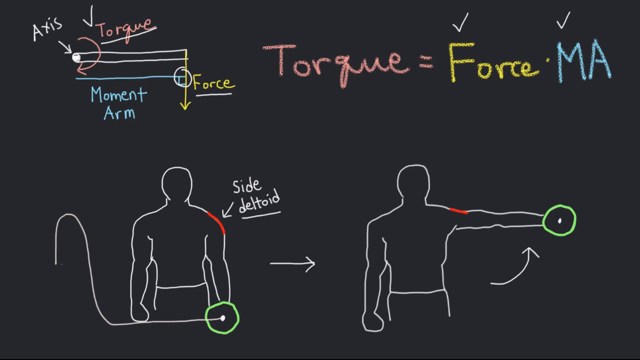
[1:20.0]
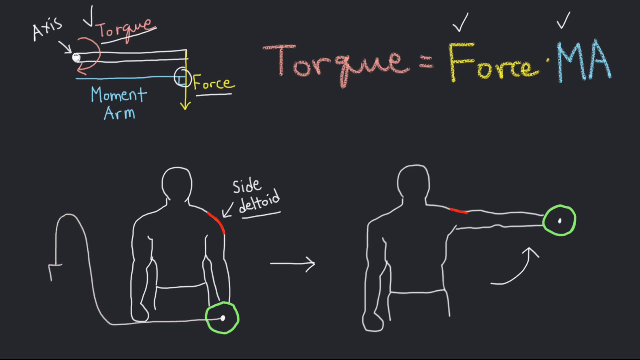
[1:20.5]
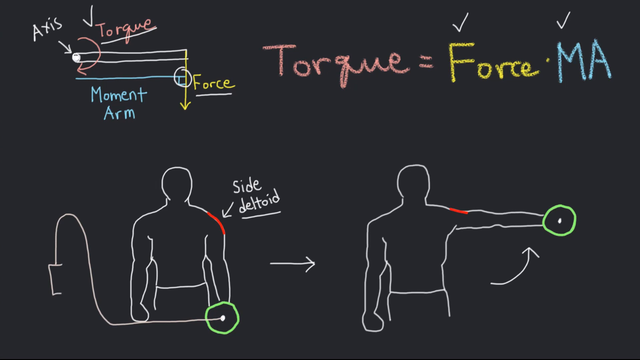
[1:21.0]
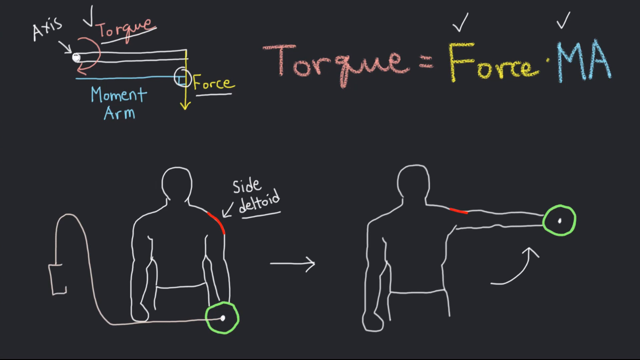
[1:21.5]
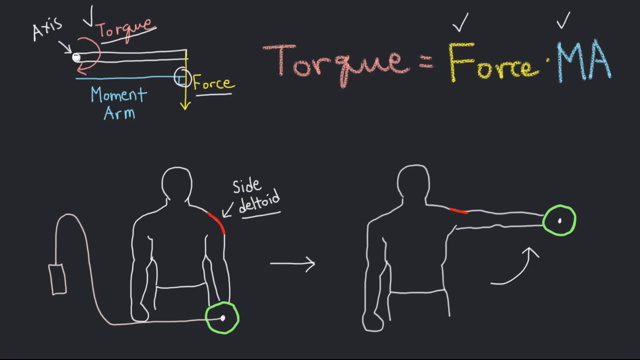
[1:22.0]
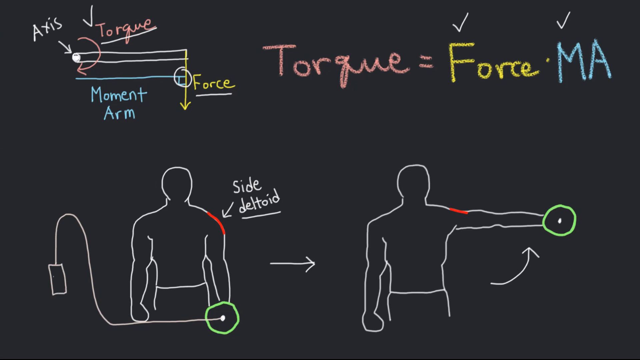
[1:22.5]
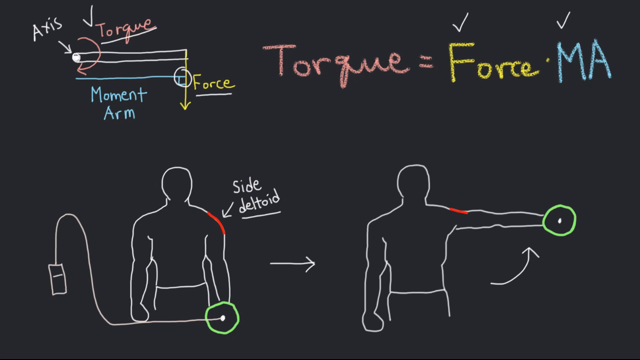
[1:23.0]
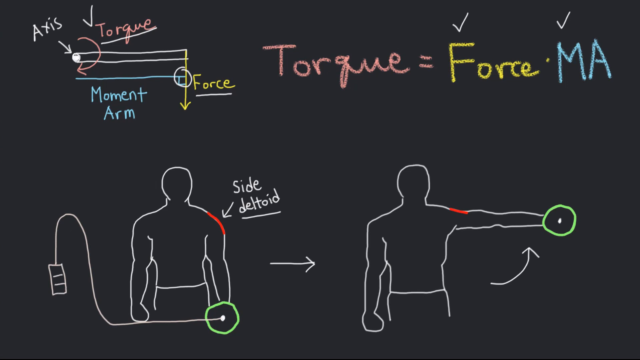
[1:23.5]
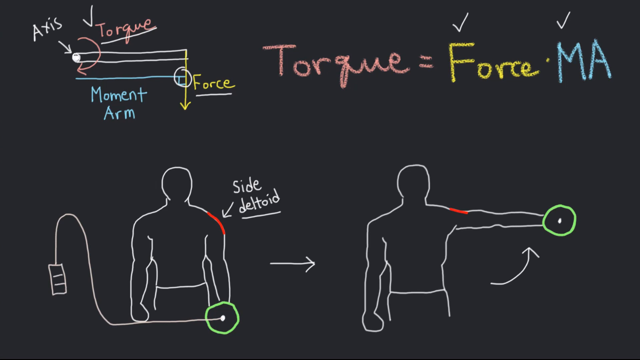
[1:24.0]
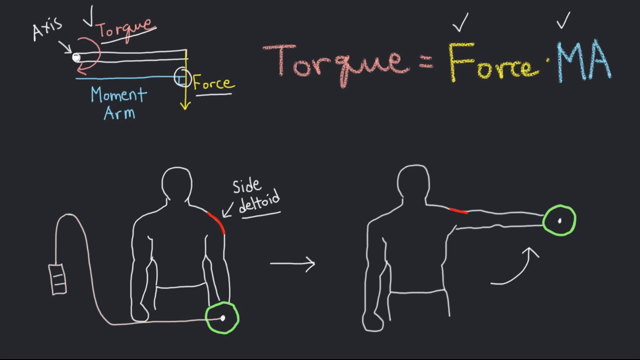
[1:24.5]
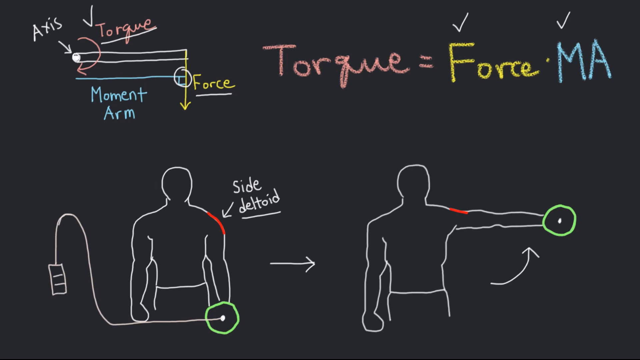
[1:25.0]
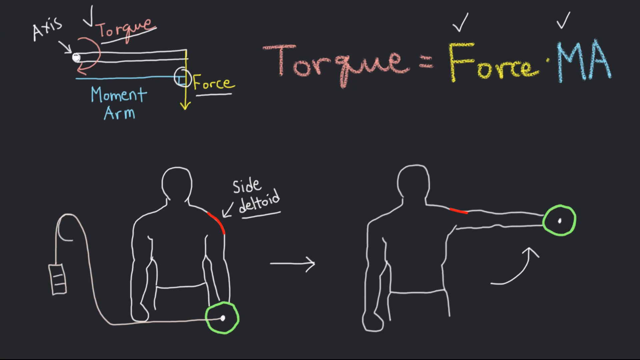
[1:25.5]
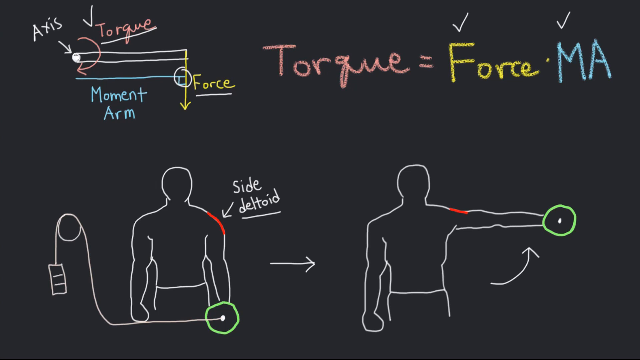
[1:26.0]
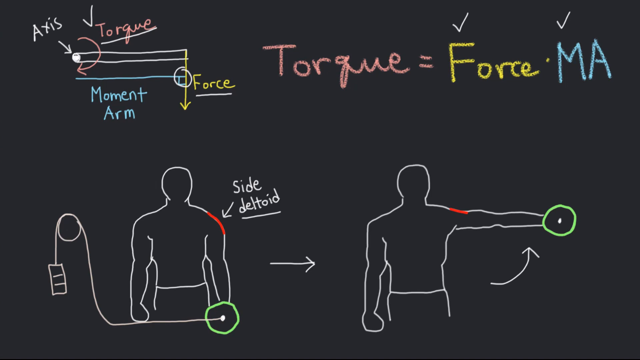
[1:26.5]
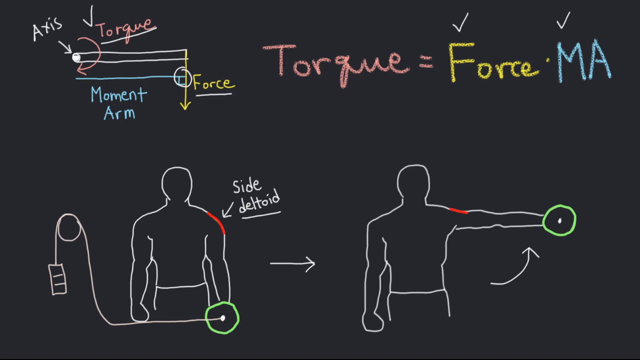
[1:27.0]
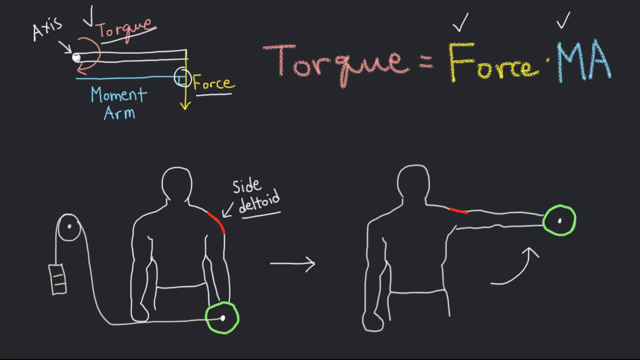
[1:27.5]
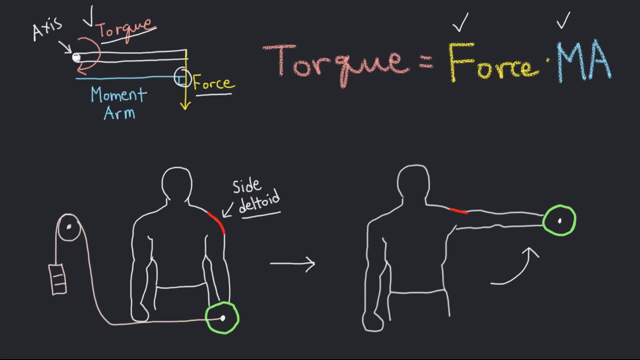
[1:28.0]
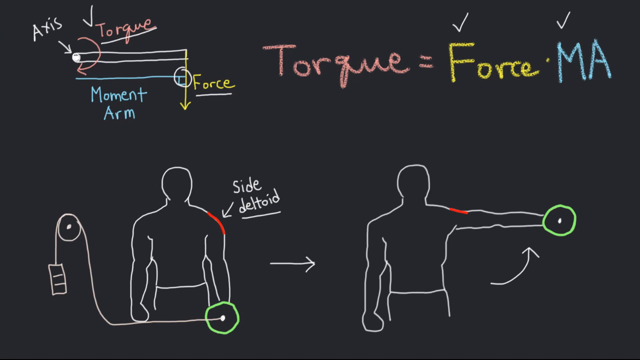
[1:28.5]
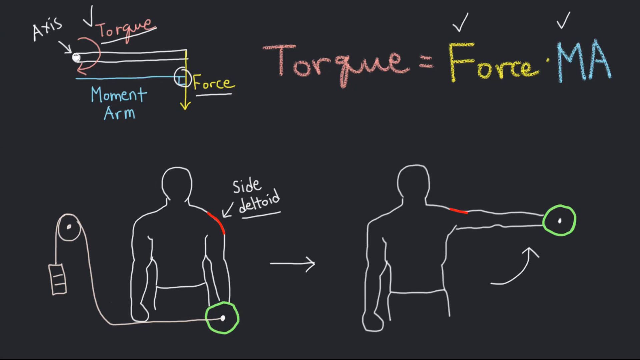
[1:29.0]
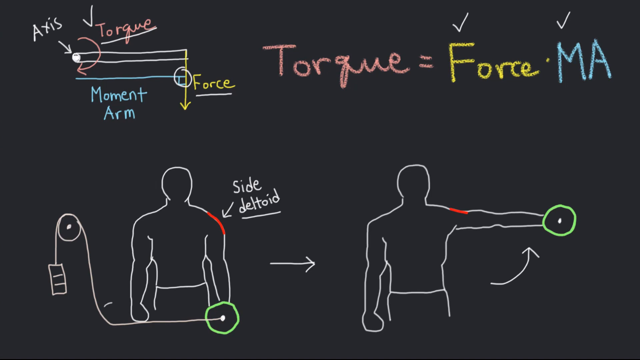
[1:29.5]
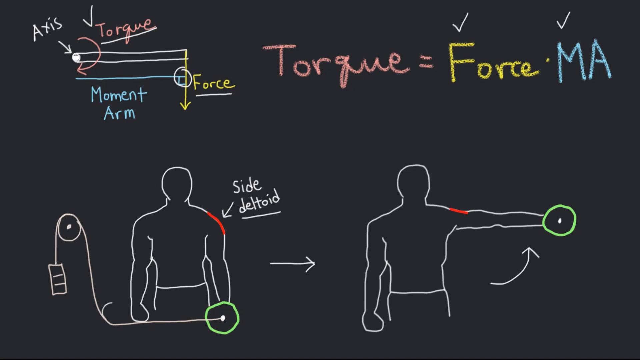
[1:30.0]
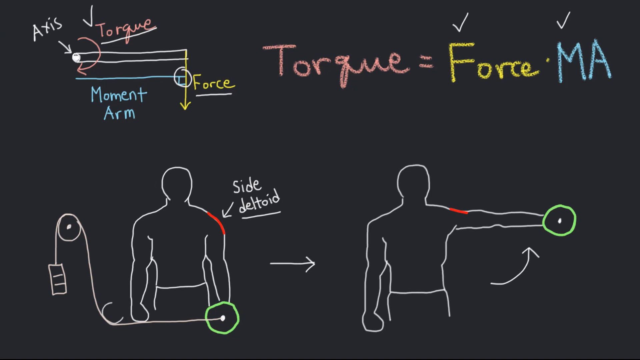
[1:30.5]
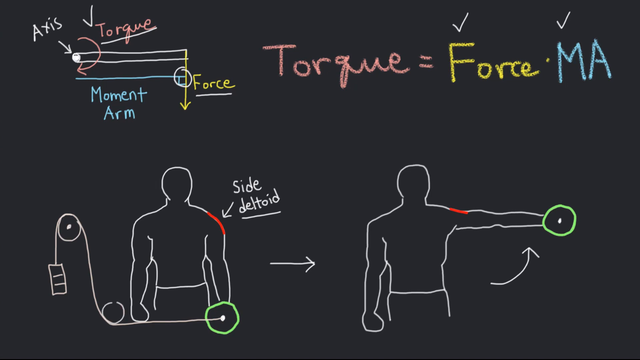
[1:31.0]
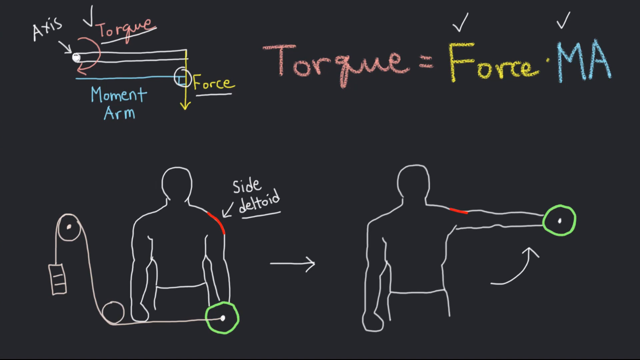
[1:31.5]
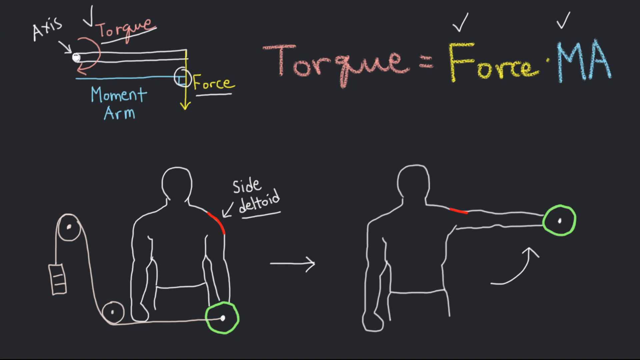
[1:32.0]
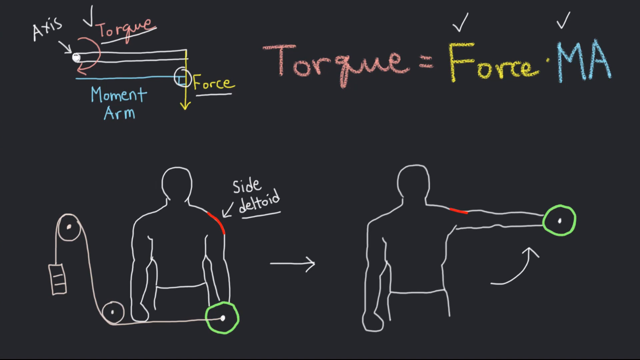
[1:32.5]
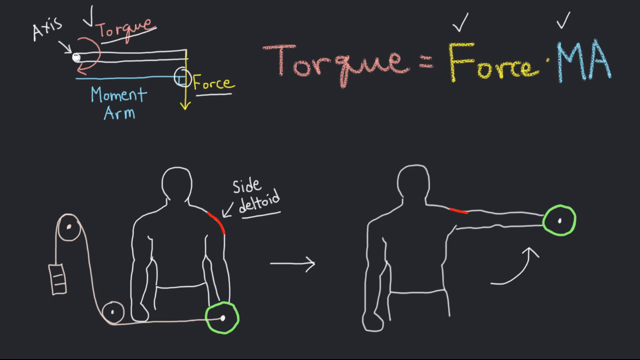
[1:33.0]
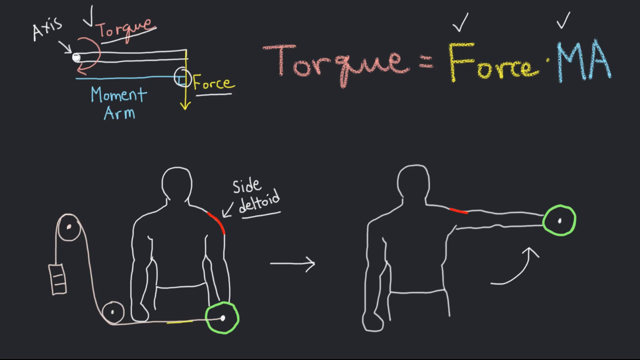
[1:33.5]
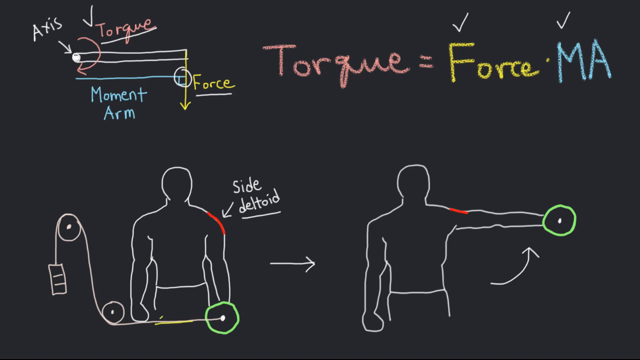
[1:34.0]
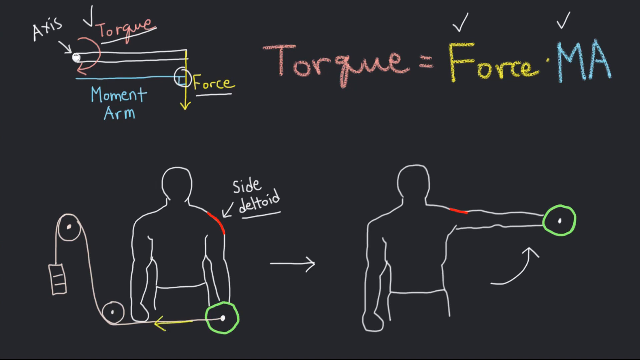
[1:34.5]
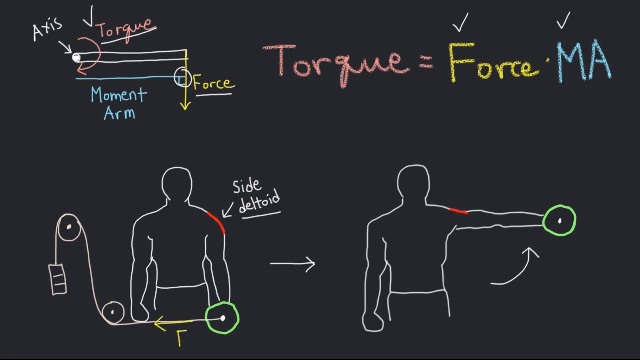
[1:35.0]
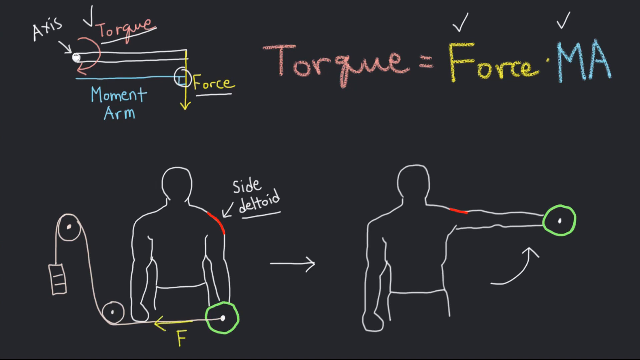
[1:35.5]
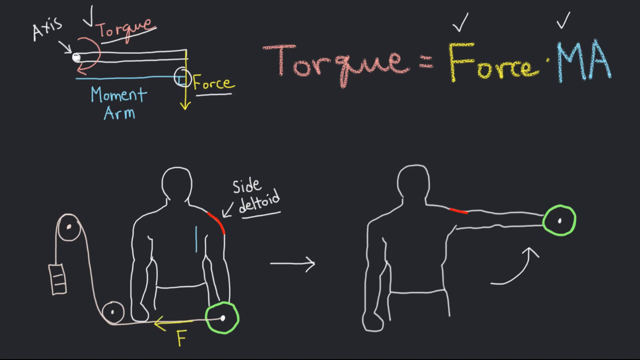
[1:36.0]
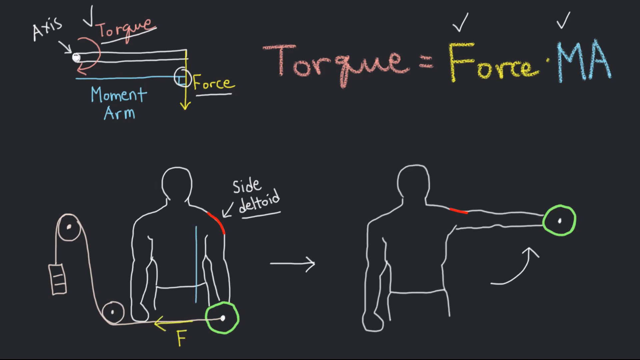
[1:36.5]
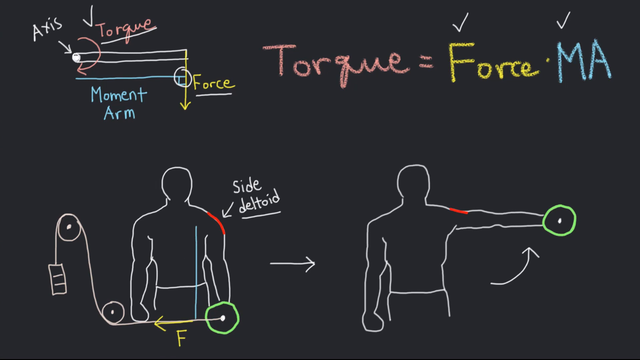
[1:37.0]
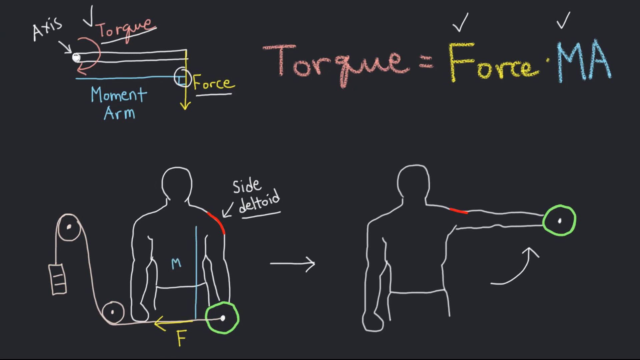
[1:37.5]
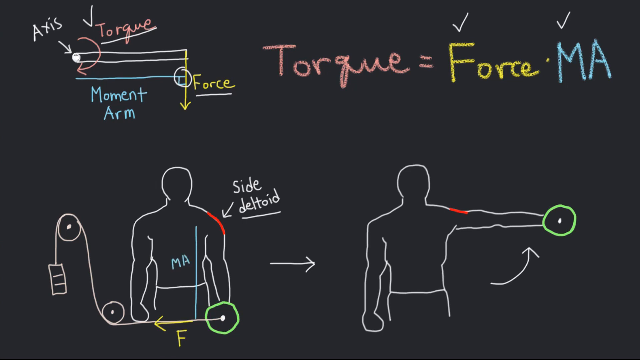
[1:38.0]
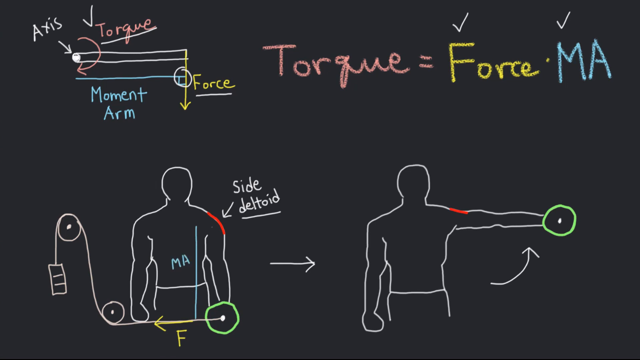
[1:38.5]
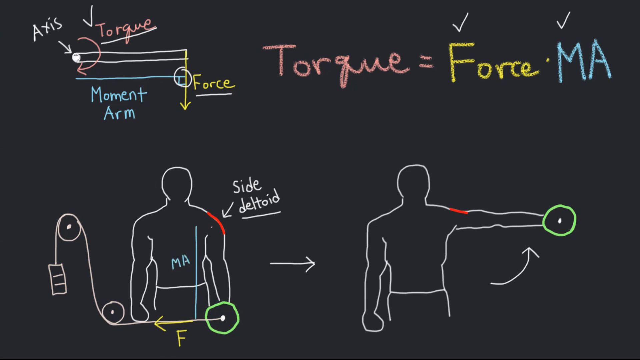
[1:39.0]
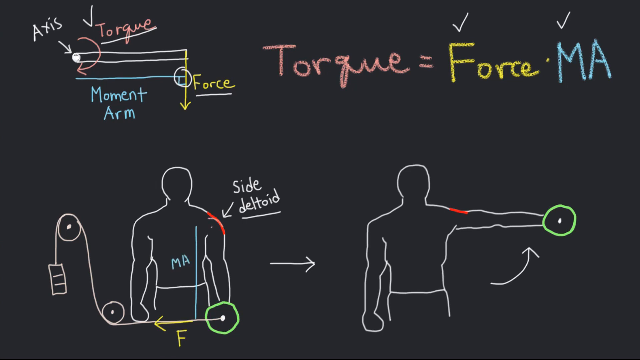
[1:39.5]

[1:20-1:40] The curve in the lower left corner is built upon: a rectangle hanging off of it with three boxes and a circle is added, kind of like a pulley pulling from the left figure's right arm. A new MA with a blue vertical line is put over the man's torso. The pulley now goes from his left hand to outside his right side, possibly so that he can pull it across and create force. A yellow arrow with an F kind of indicates motion toward his right side. All the activity is in the lower left, where a pulley system is created that is connected to what the man holds in his left arm.